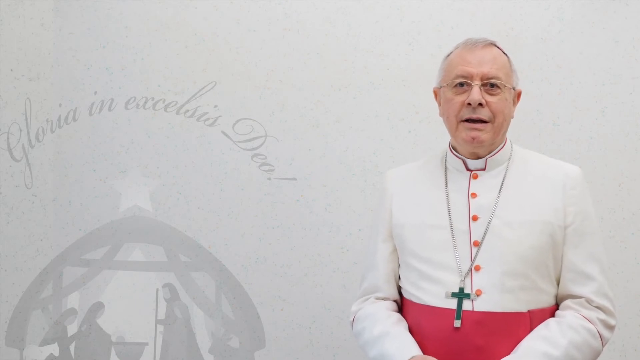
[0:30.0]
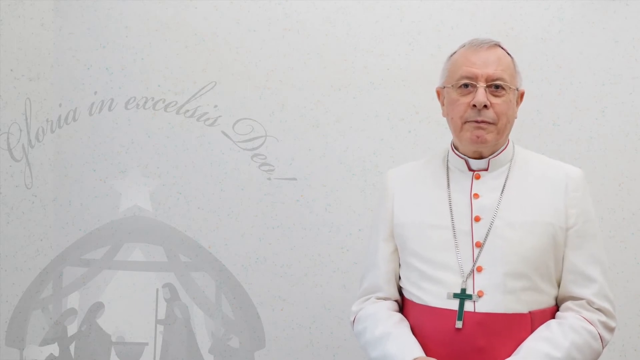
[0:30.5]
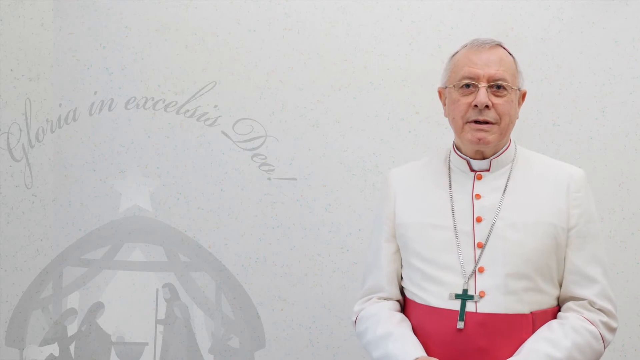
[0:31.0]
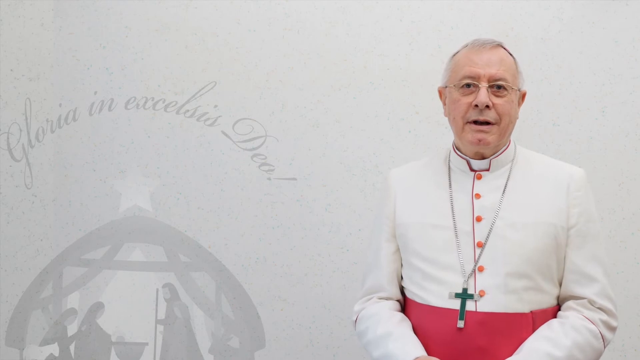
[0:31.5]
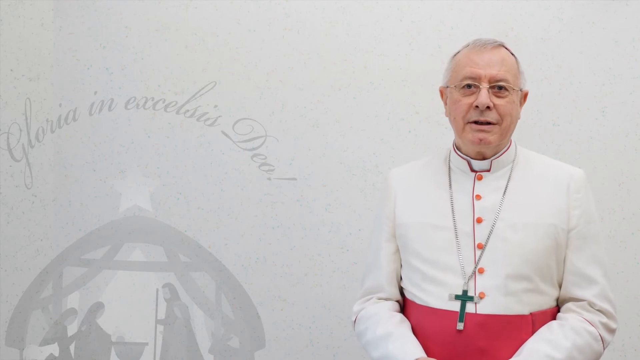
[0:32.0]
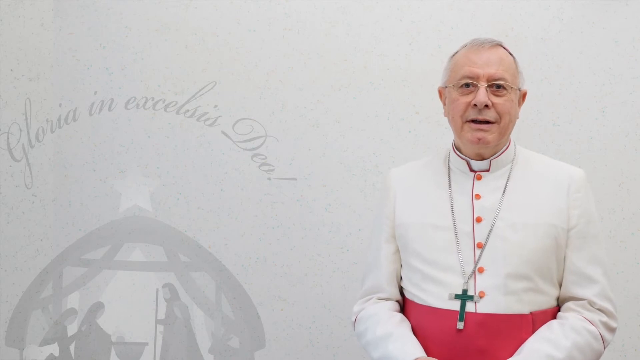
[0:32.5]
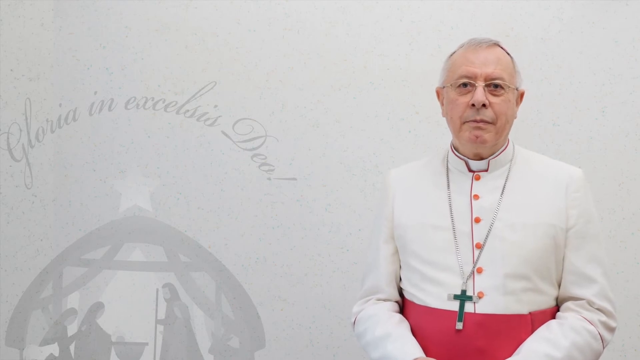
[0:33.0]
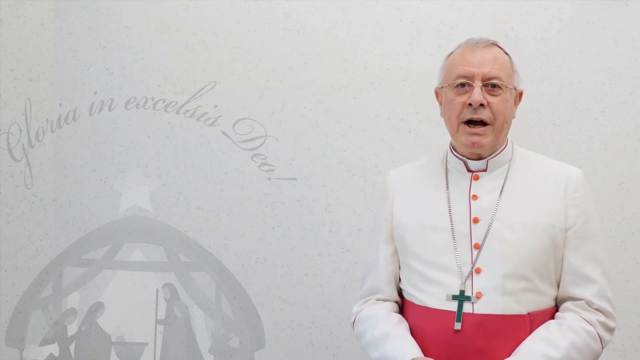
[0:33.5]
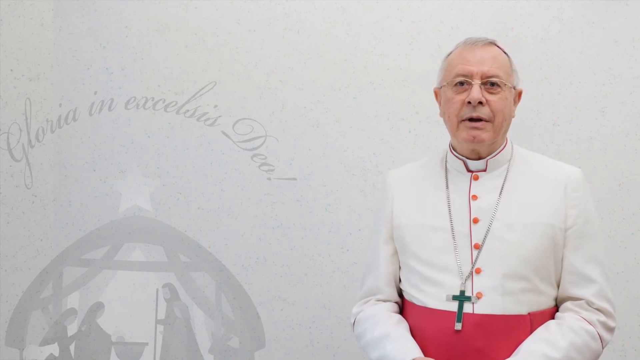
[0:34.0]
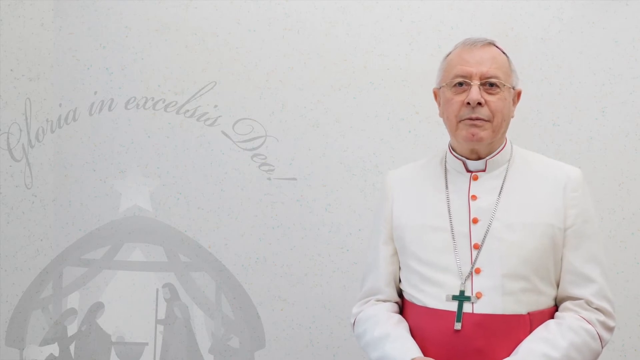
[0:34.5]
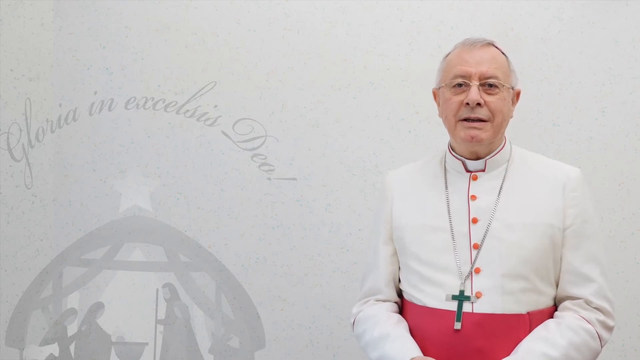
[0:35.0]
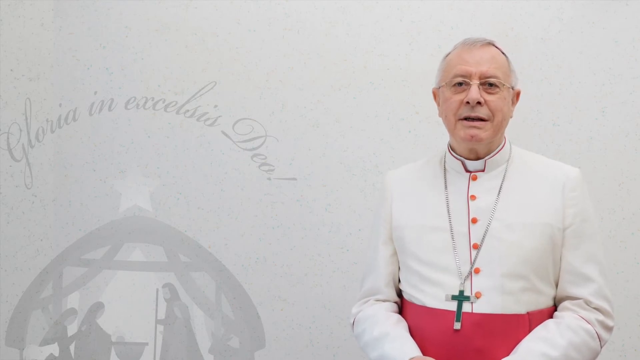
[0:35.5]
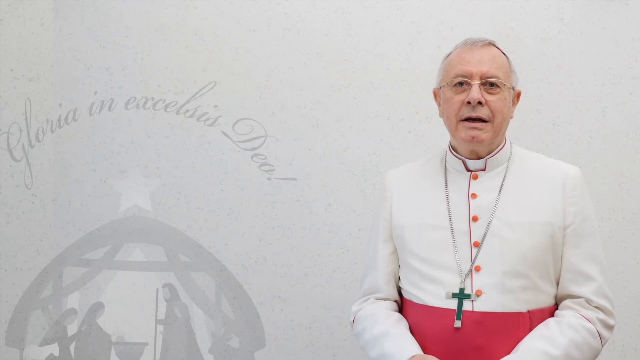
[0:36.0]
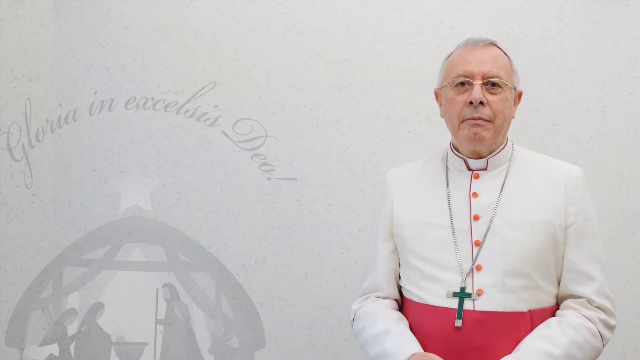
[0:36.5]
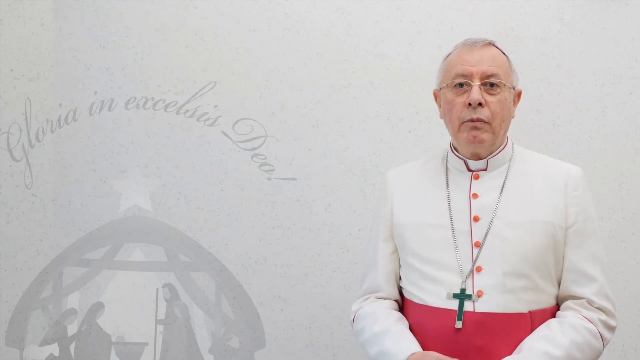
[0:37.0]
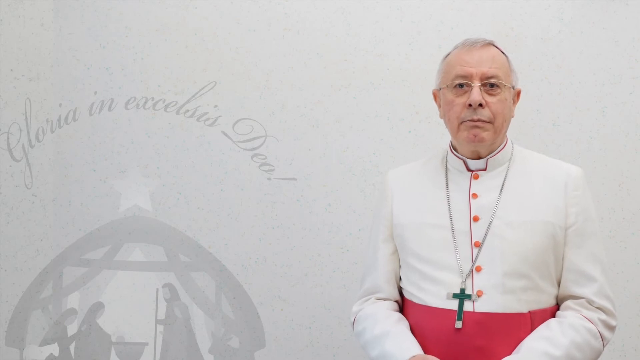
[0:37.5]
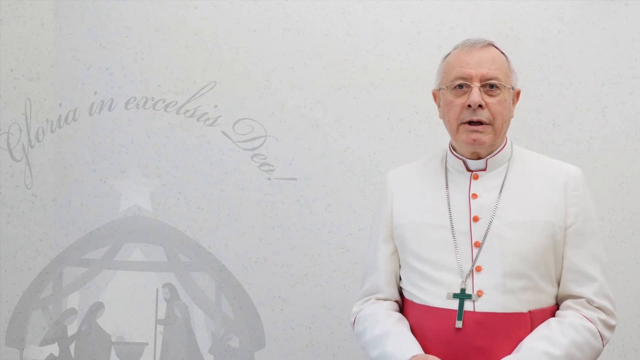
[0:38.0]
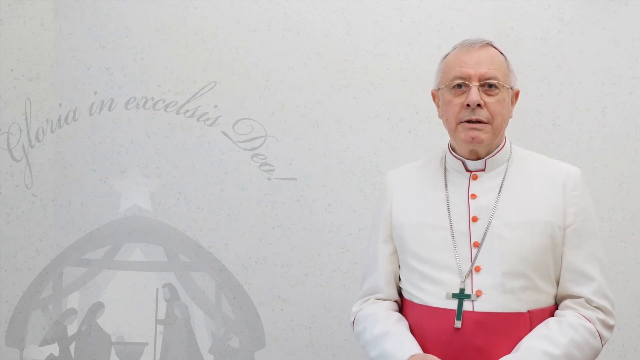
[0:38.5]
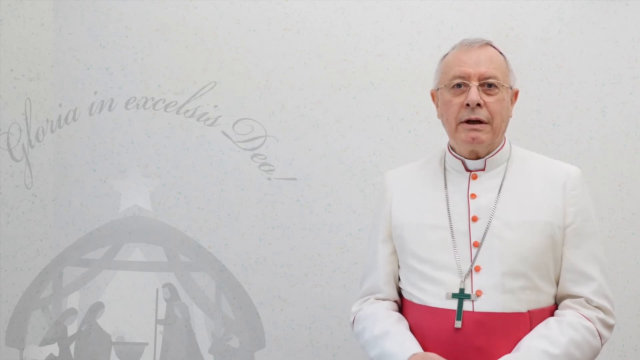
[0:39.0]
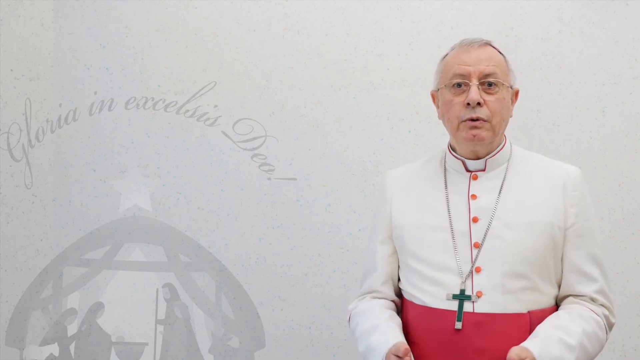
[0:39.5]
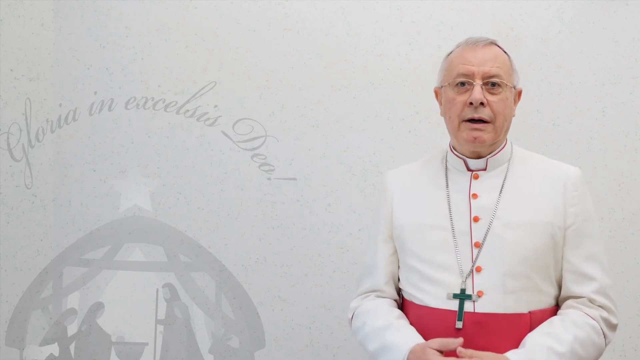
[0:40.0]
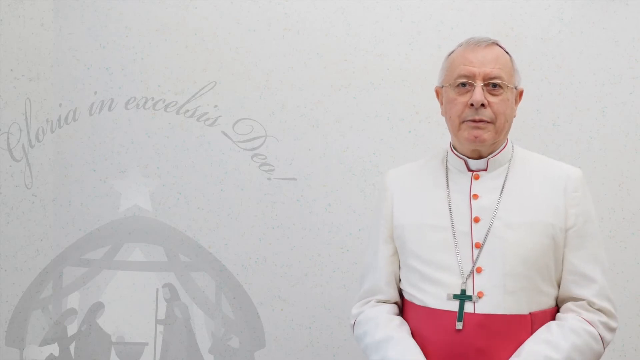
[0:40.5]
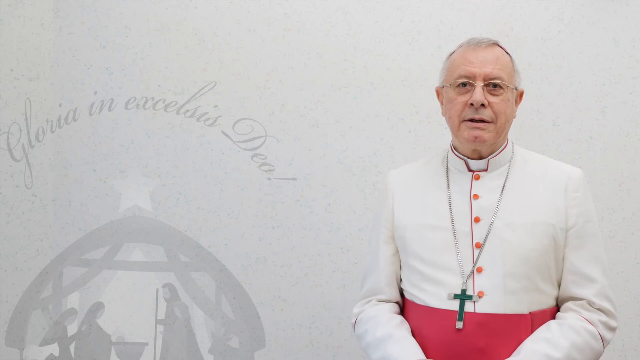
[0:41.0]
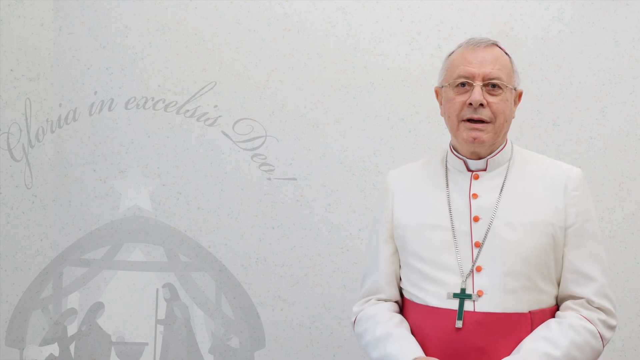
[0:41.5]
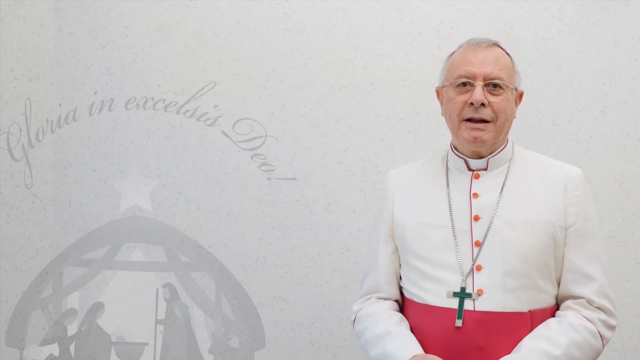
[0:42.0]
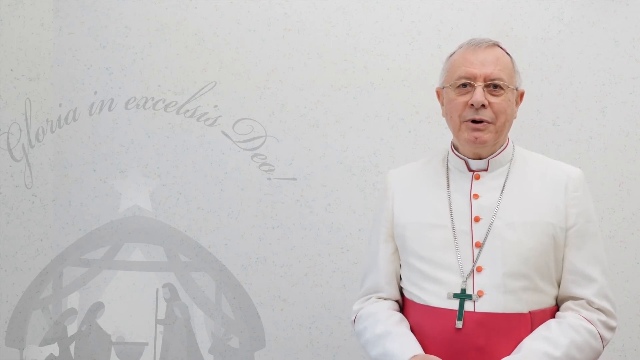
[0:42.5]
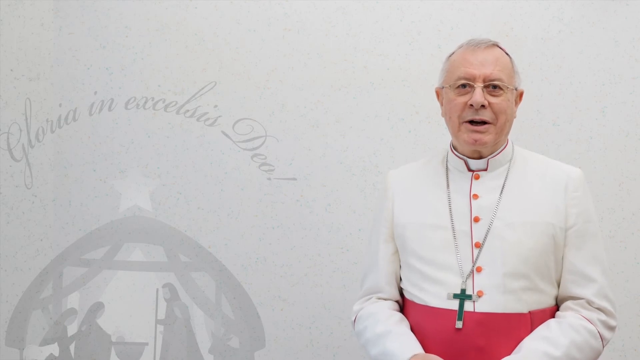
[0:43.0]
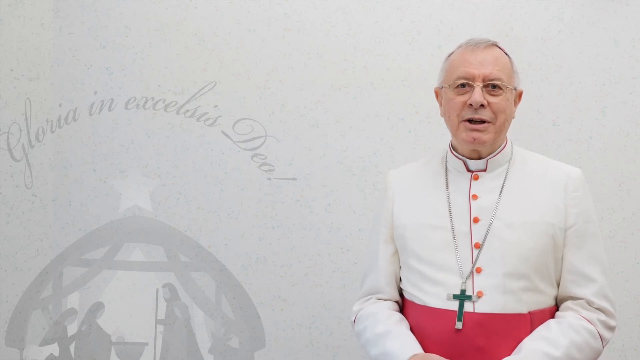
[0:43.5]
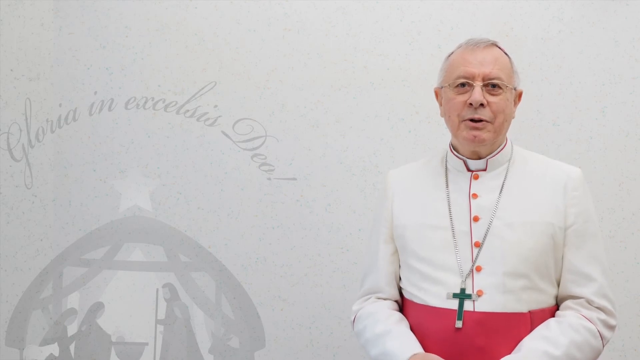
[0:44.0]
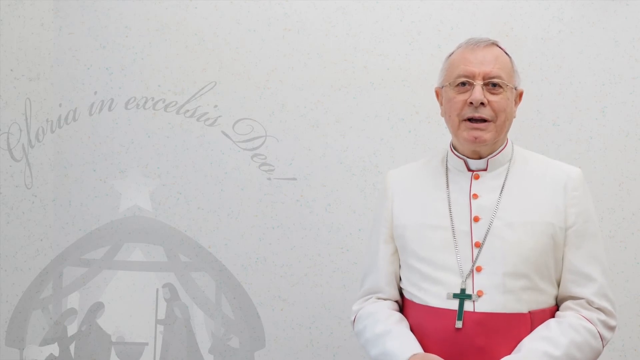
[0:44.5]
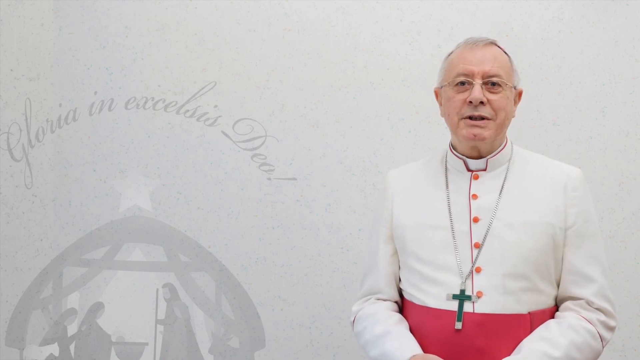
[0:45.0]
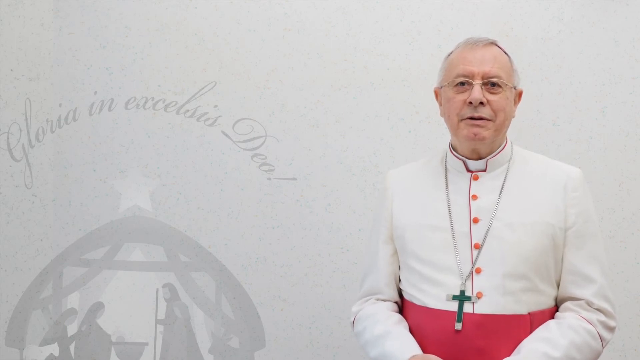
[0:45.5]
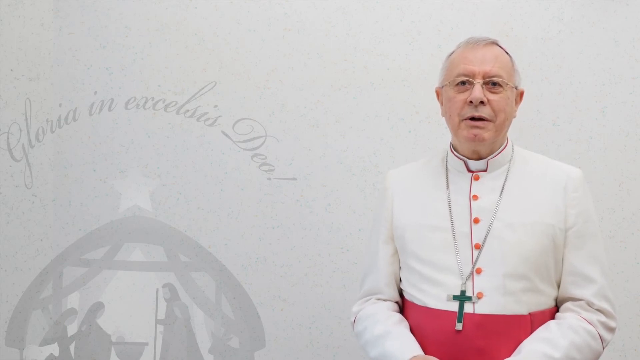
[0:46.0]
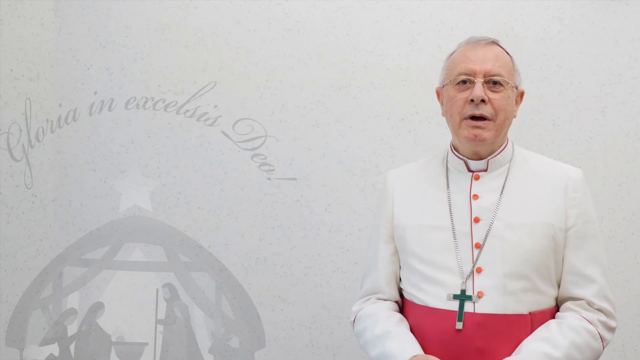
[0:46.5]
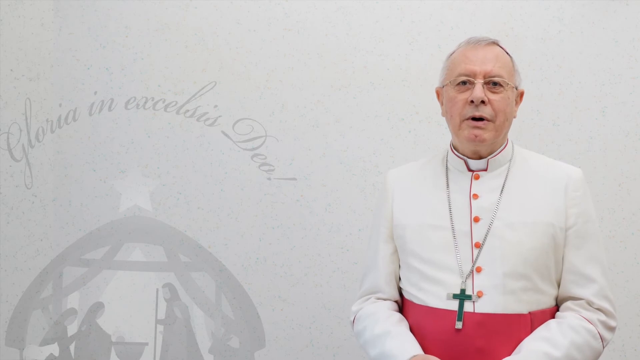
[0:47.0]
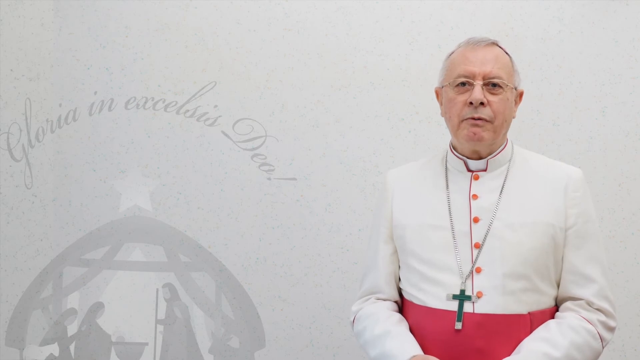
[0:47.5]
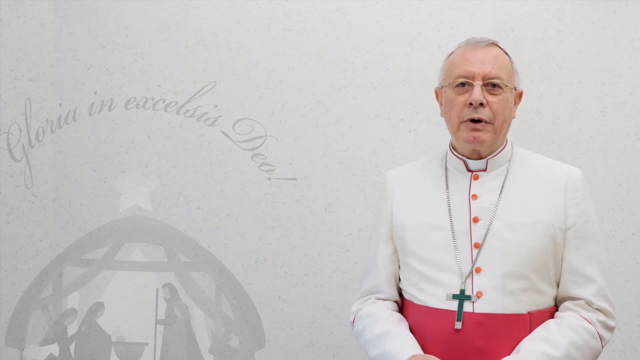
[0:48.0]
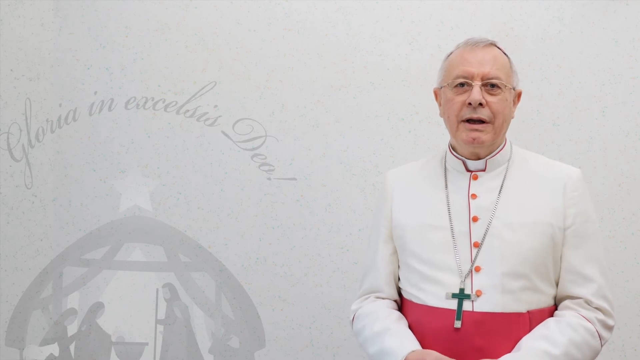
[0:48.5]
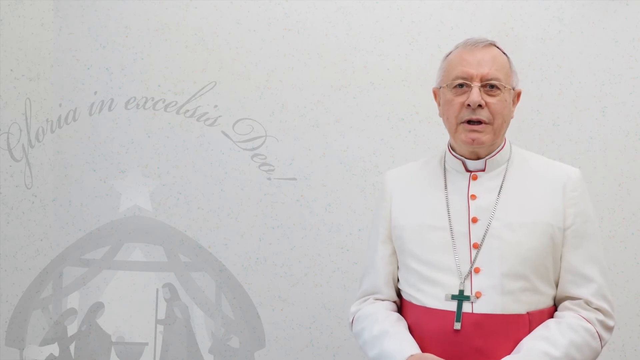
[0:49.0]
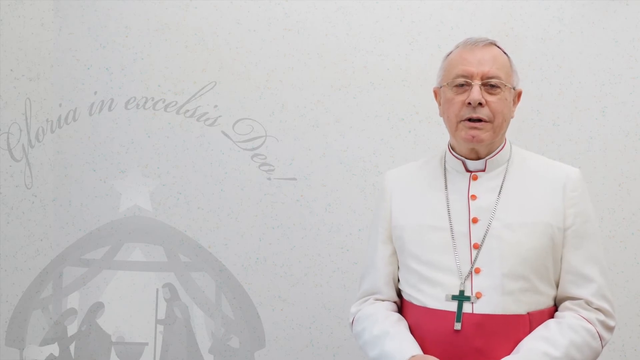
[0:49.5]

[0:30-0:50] A man dressed in priest clothing stands to the right. On the left side, against a light gray background, are some written words, and below them is what looks to be a nativity scene with a star directly above it. The man talks, every now and then with a slight smile, and his arms move slightly as he speaks. Around his neck is a chain with a dark green cross at the end. He wears glasses, and there looks to be something on the top of his head. A light red or pink belt goes around the midsection of his garment.